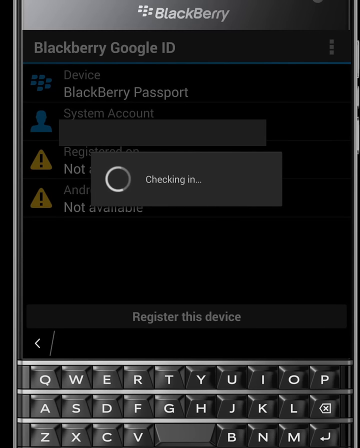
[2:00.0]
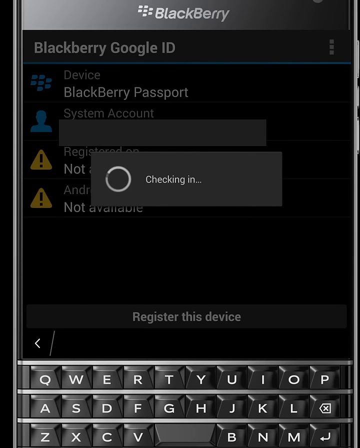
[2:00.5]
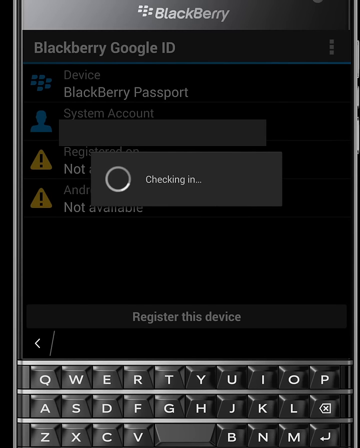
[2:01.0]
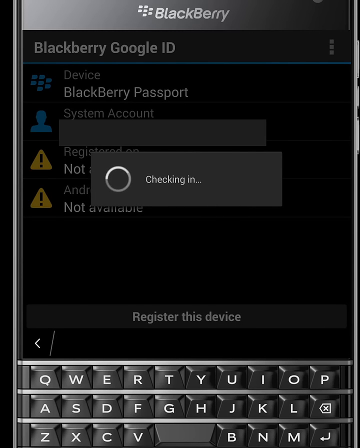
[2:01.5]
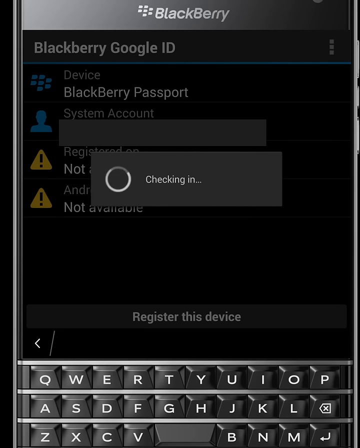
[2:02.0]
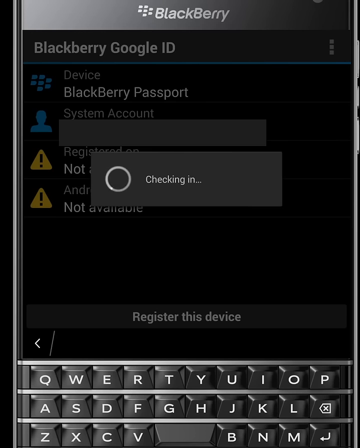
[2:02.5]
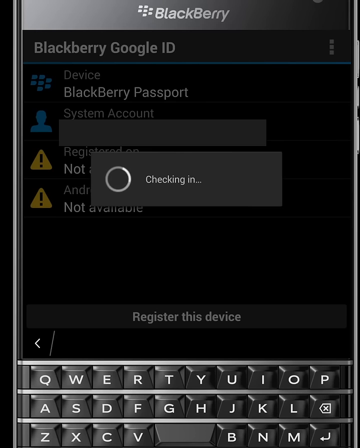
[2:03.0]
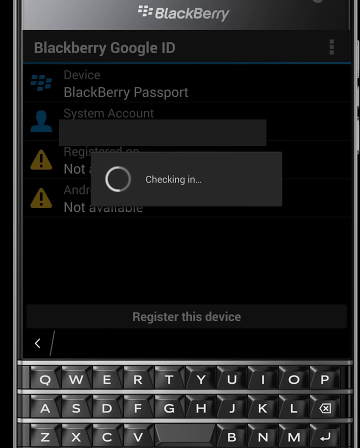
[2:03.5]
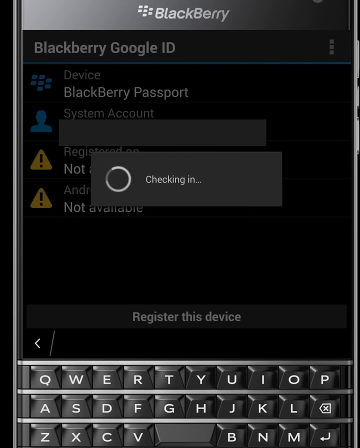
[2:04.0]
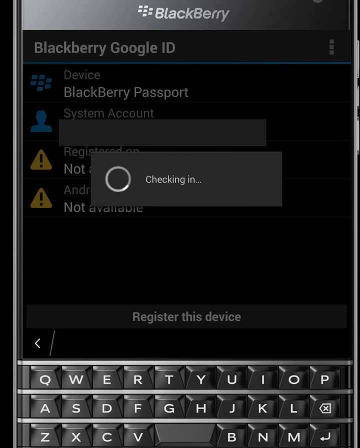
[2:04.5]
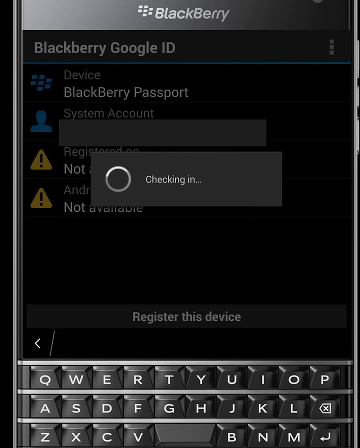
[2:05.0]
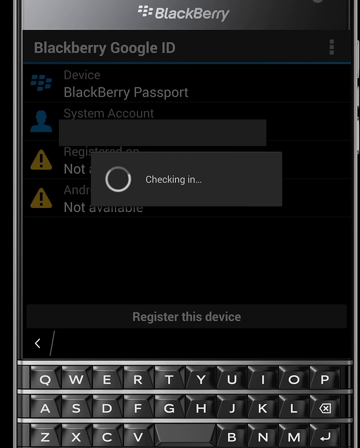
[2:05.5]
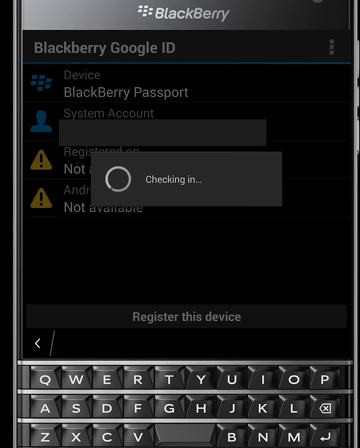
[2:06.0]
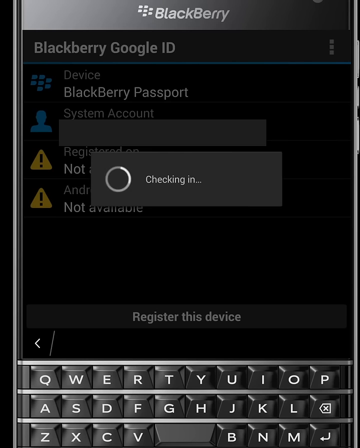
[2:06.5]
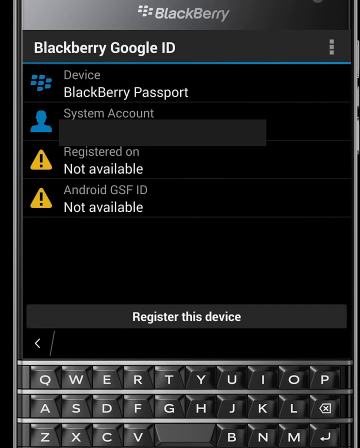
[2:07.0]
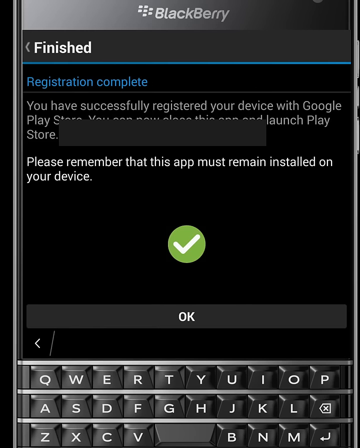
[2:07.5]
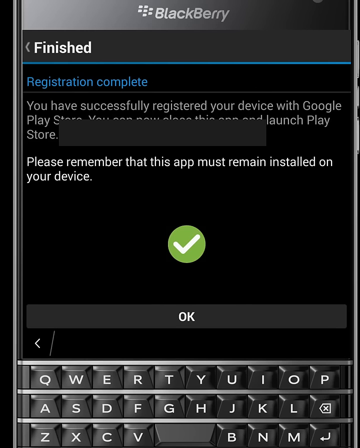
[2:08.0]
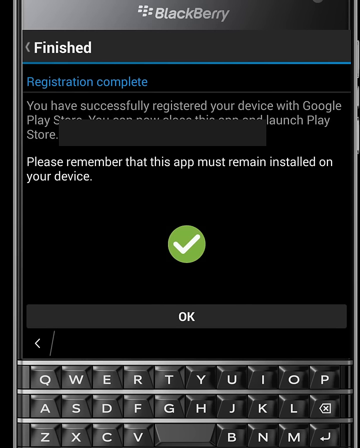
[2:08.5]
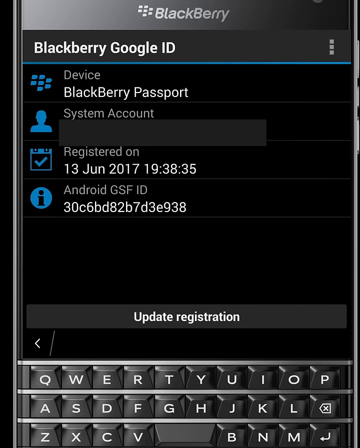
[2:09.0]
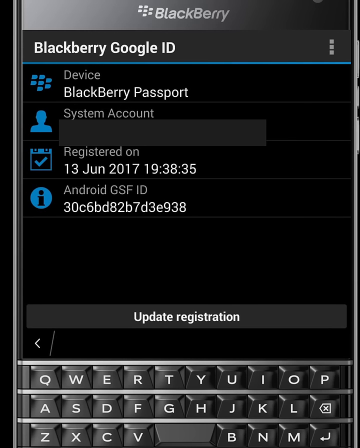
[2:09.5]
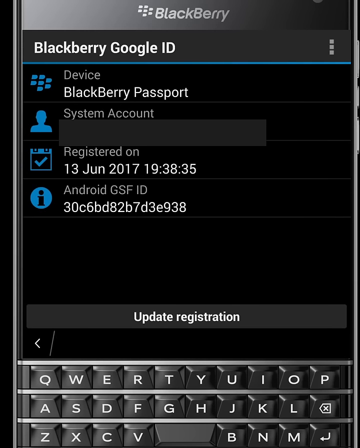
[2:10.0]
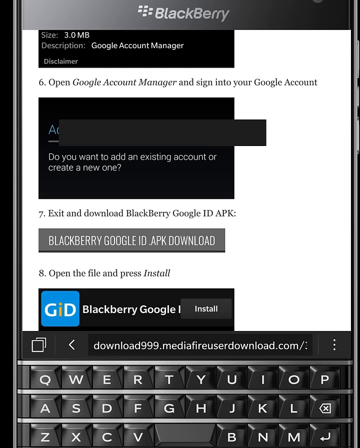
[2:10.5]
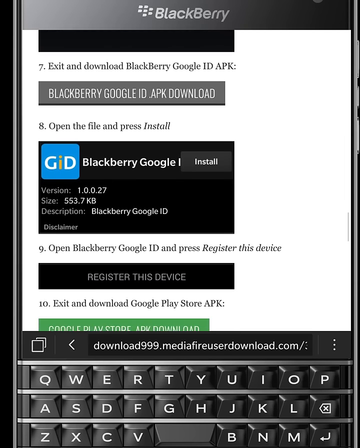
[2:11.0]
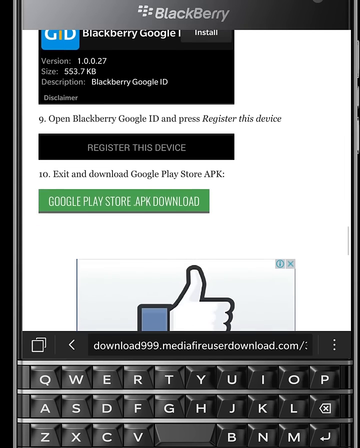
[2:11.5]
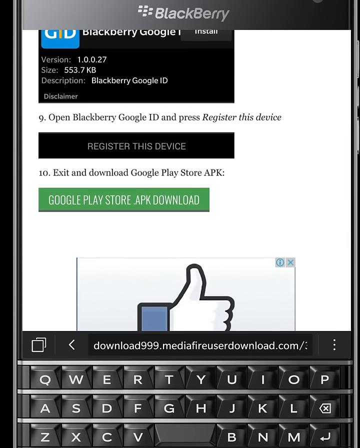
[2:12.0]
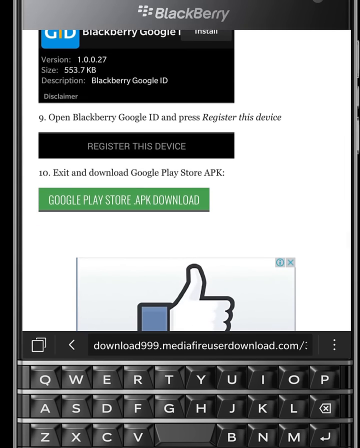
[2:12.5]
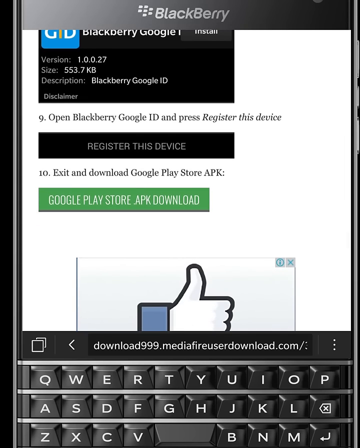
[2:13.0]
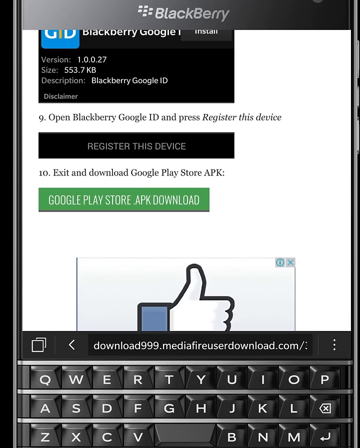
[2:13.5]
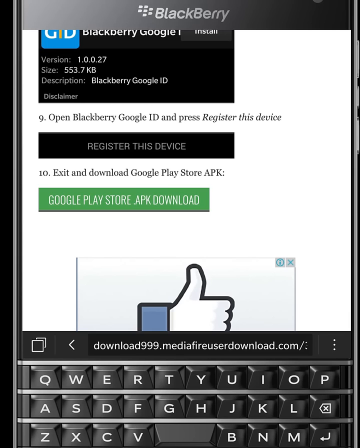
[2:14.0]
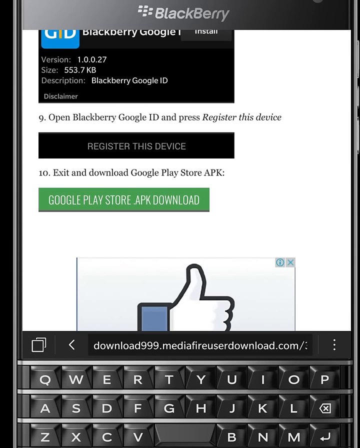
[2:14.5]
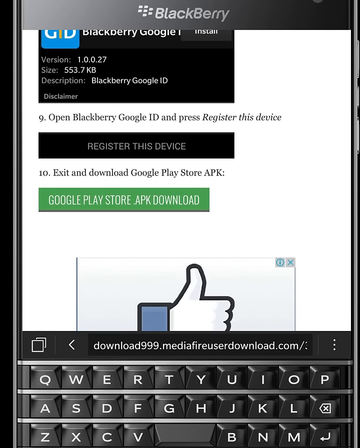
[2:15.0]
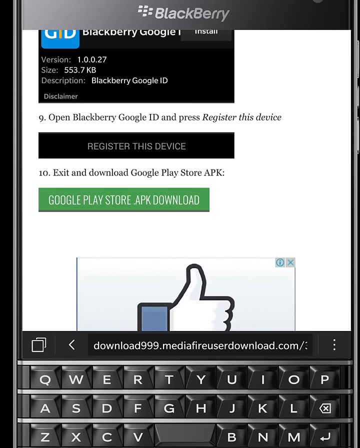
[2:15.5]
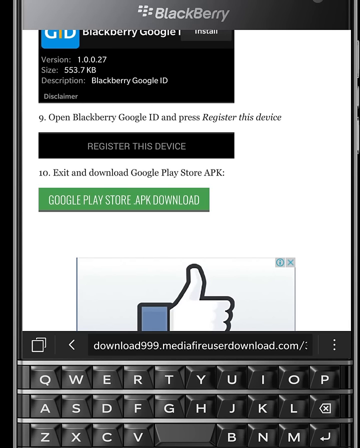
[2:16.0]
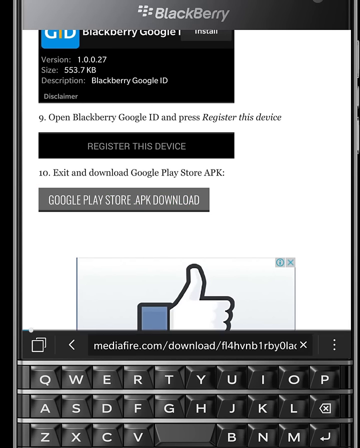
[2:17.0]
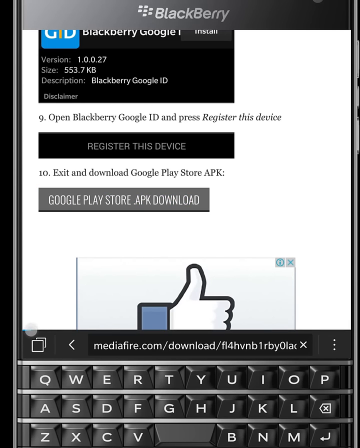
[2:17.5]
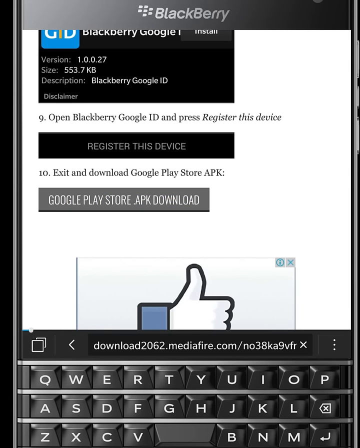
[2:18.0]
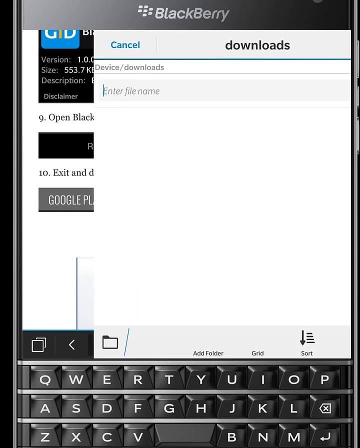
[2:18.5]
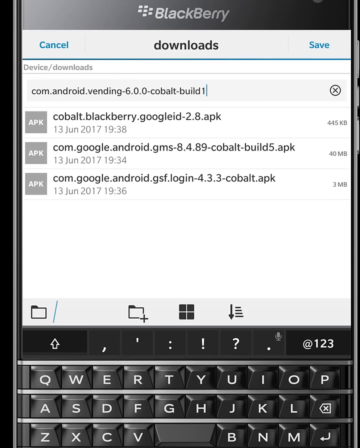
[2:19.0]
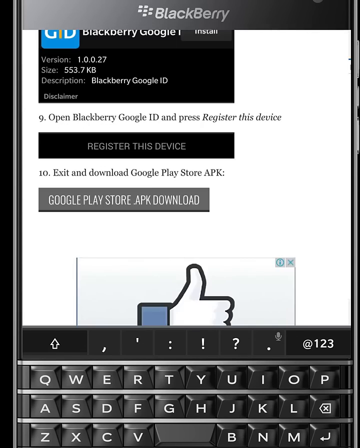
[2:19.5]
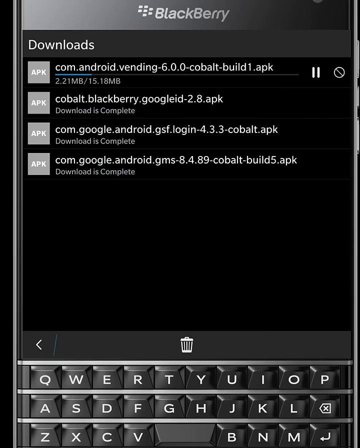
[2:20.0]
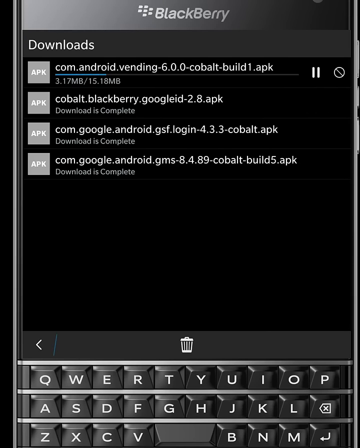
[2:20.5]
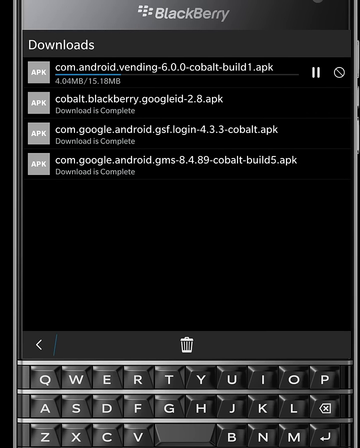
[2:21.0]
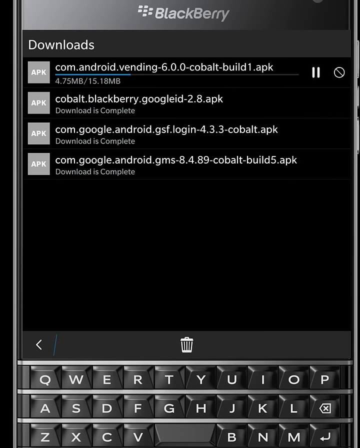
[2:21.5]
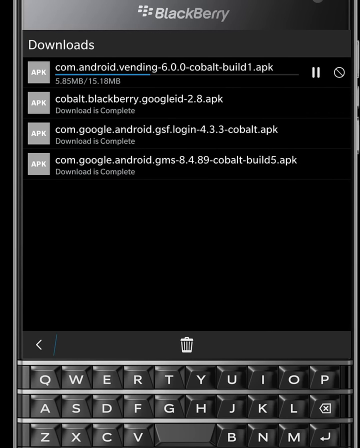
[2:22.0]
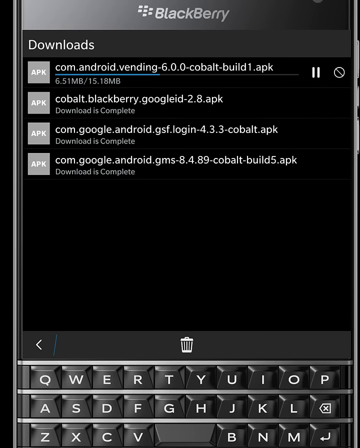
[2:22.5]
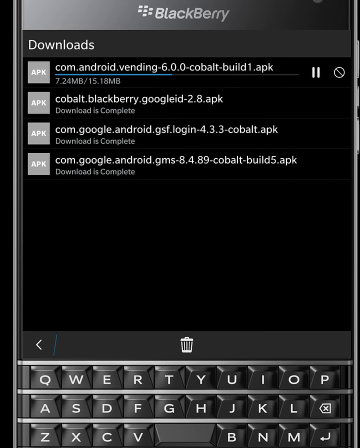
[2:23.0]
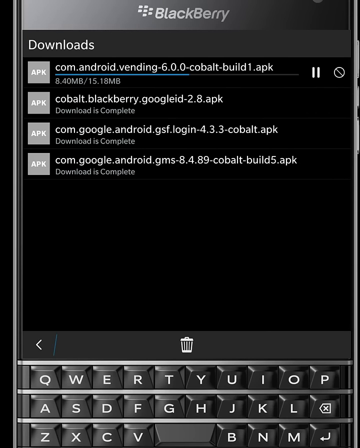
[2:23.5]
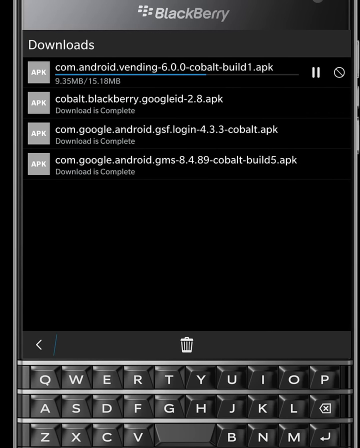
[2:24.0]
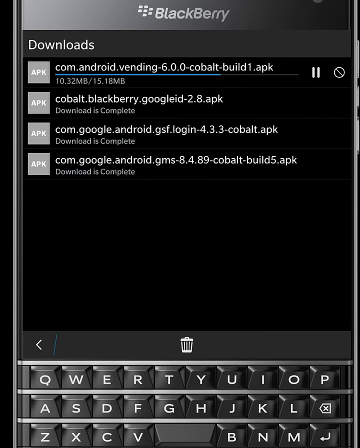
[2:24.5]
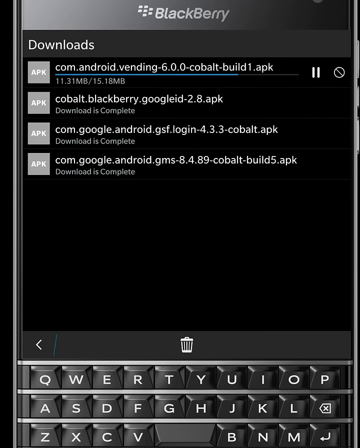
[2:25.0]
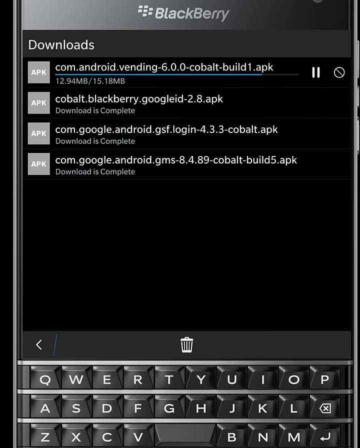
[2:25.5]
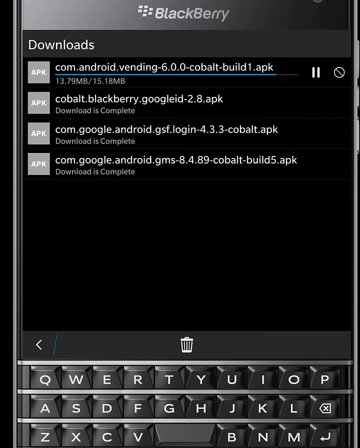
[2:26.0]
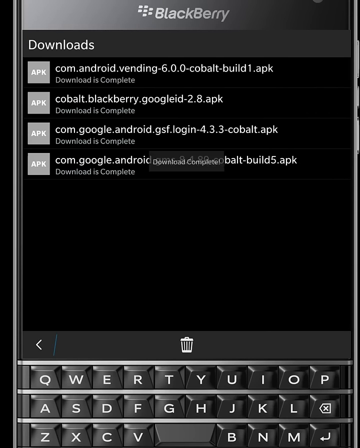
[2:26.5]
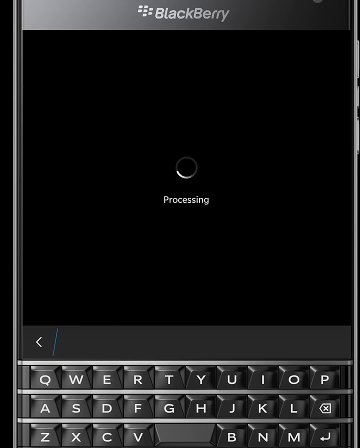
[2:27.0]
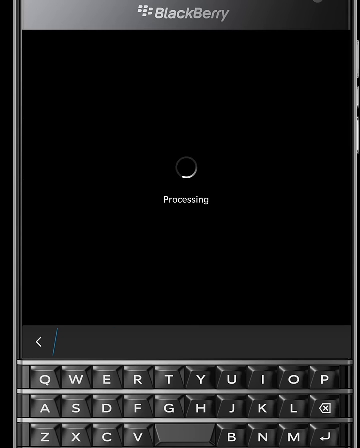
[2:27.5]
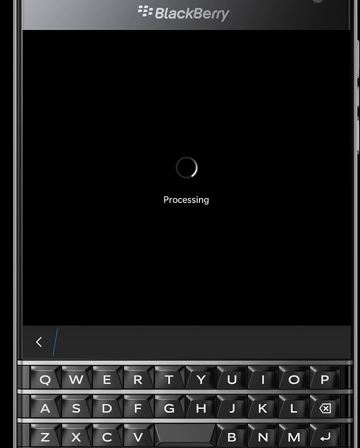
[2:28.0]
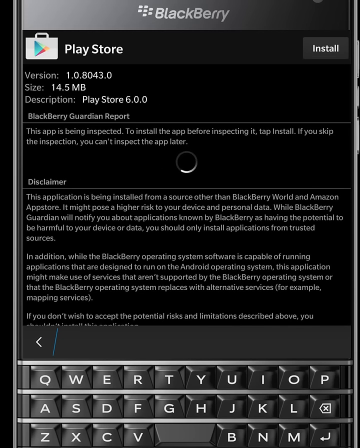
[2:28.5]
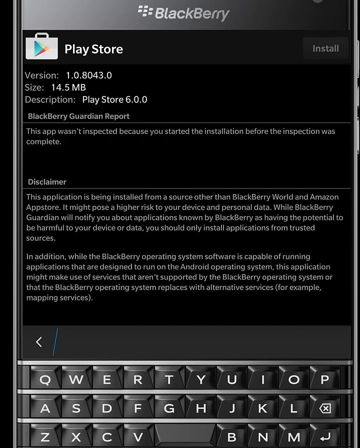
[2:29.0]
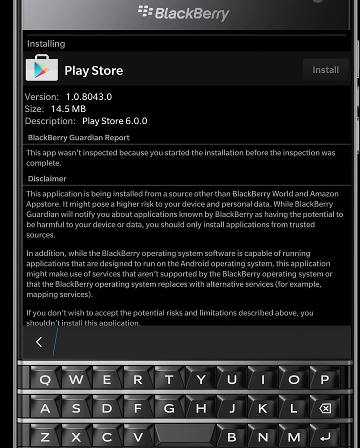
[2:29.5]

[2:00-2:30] The user works through more steps quickly, and something takes a long time to load. Something is blocked out. Something at the bottom of the screen may have to do with Facebook. A screen looks like it shows all the completed downloads. The Play Store and BlackBerry World both appear, and the phone is a BlackBerry Passport. The user seems to accomplish what they were trying to do, and at the end there is possibly a Facebook like button. The word cobalt appears somewhere on the screen.